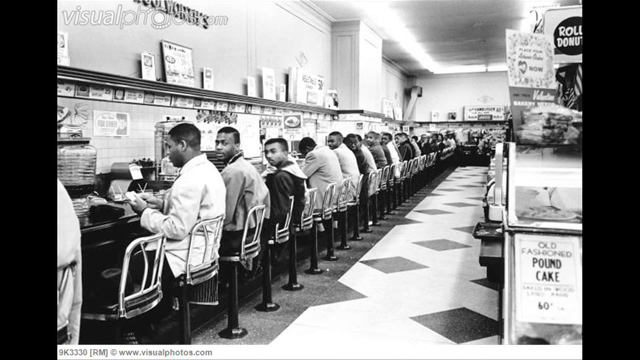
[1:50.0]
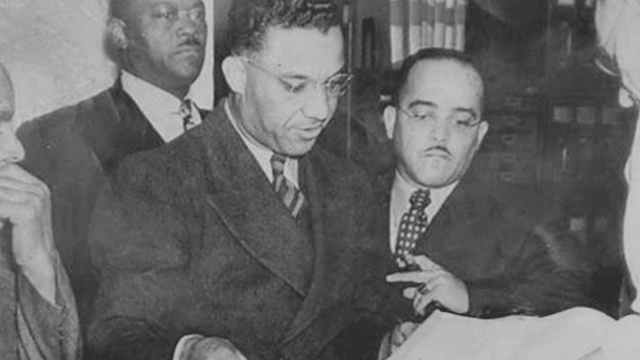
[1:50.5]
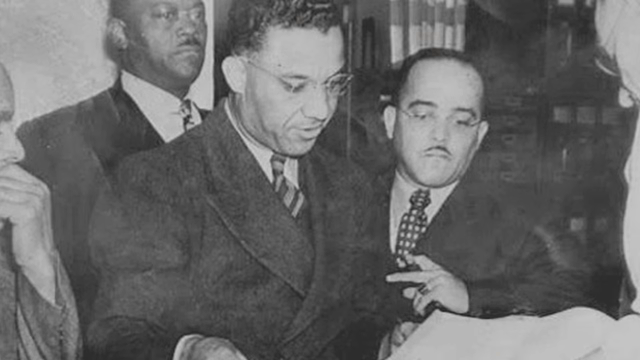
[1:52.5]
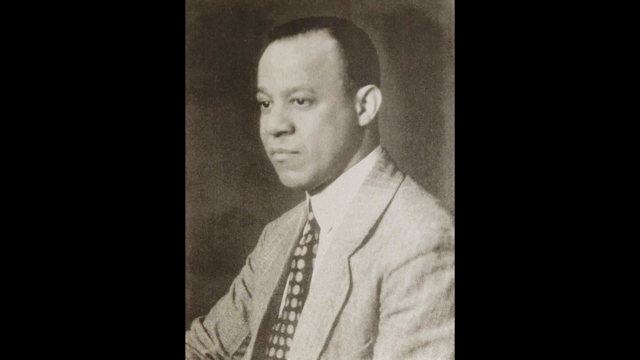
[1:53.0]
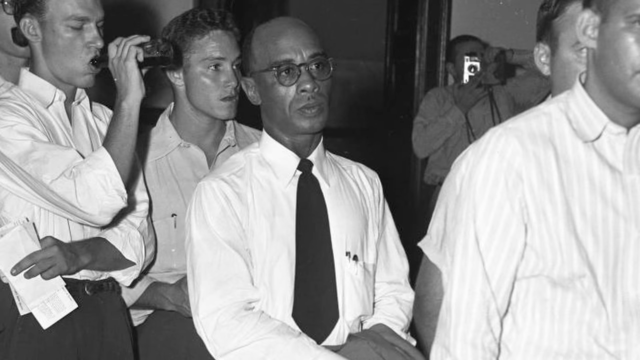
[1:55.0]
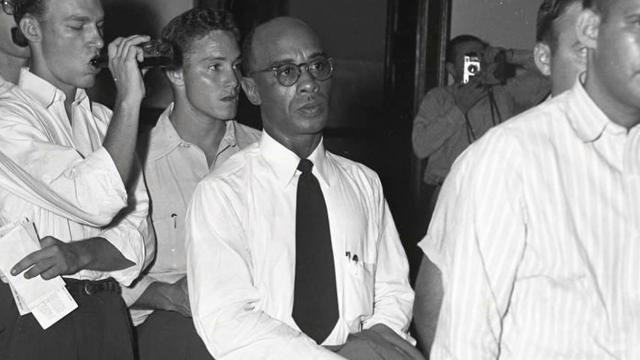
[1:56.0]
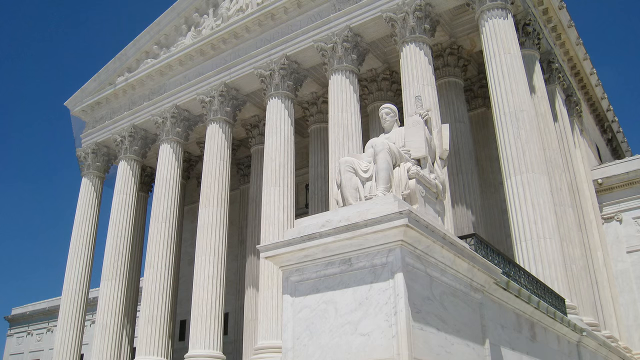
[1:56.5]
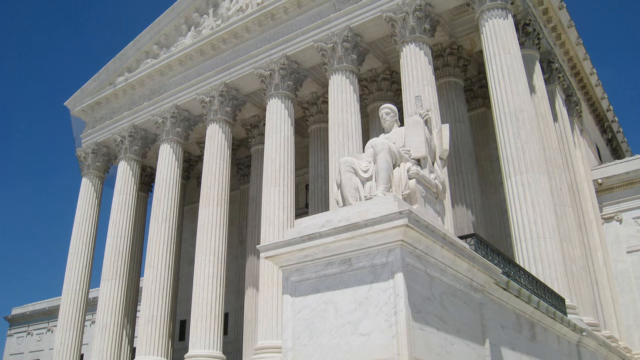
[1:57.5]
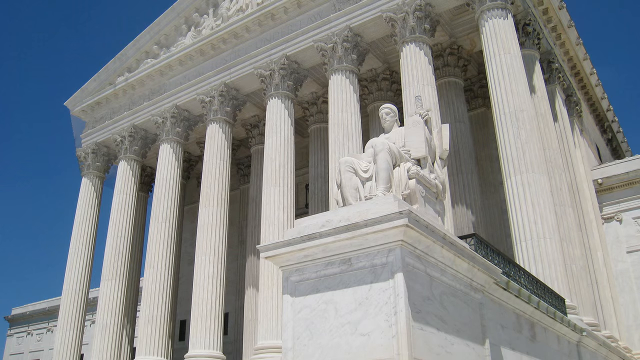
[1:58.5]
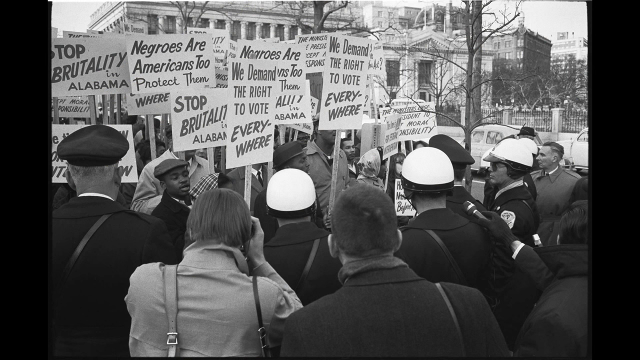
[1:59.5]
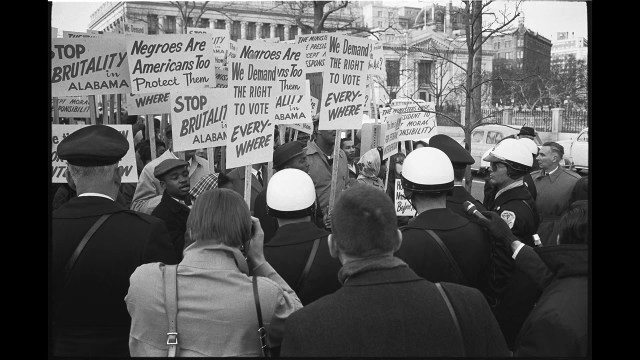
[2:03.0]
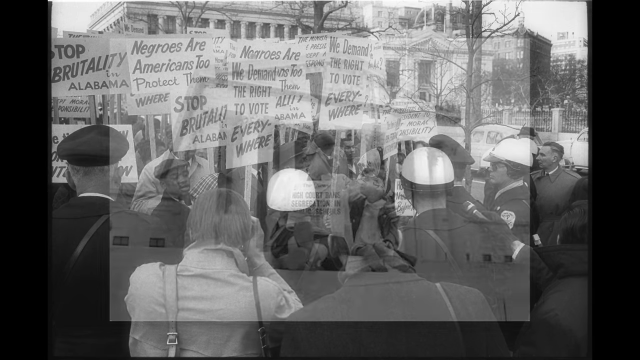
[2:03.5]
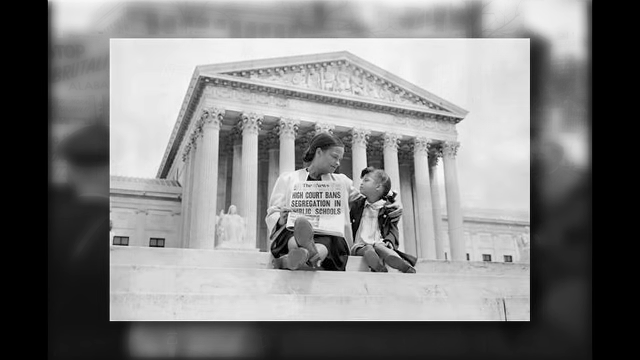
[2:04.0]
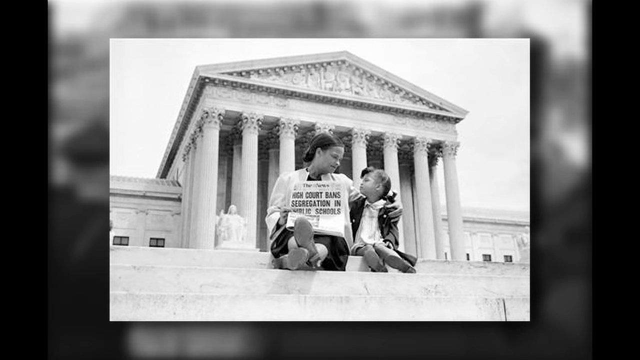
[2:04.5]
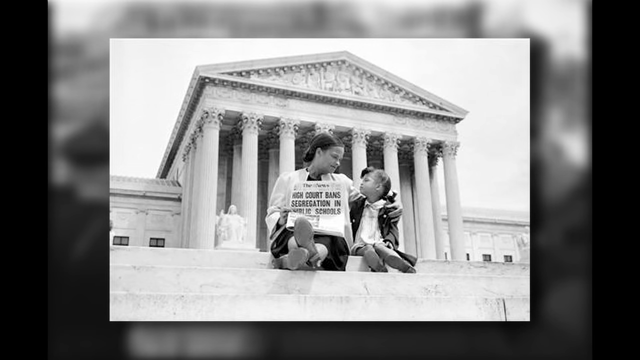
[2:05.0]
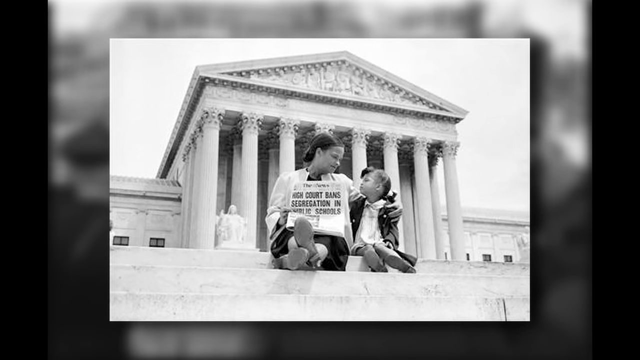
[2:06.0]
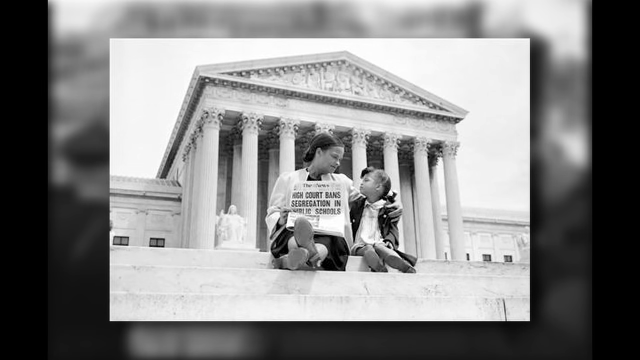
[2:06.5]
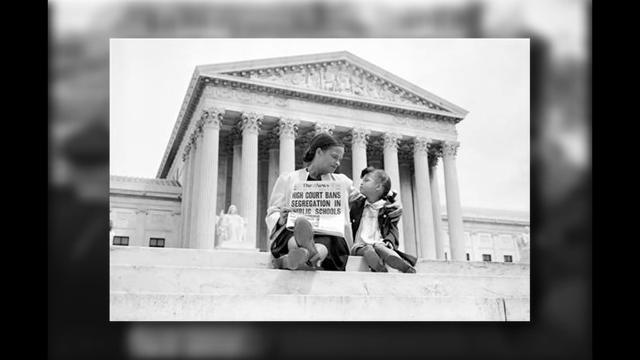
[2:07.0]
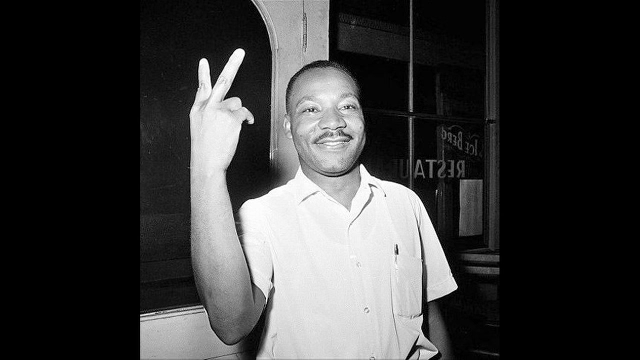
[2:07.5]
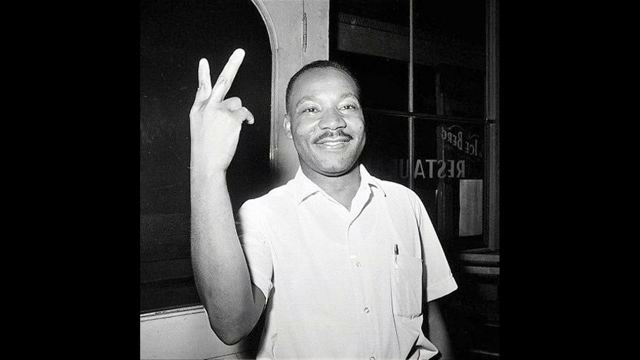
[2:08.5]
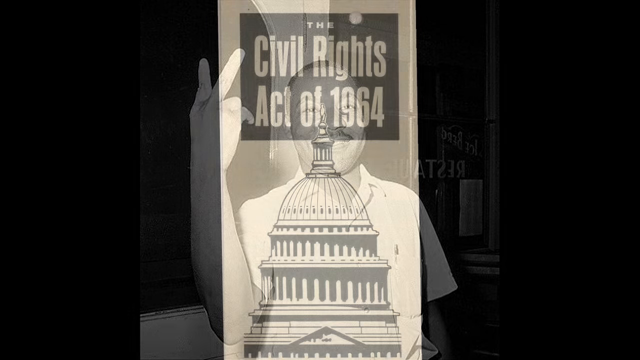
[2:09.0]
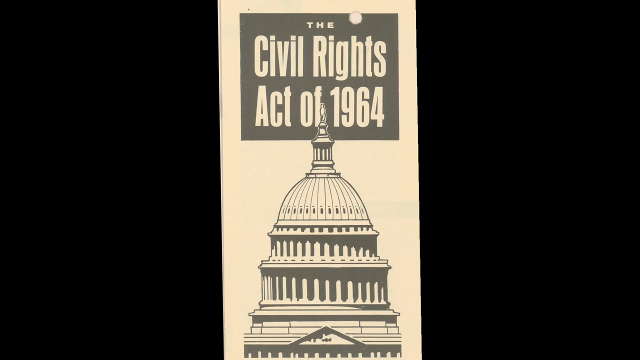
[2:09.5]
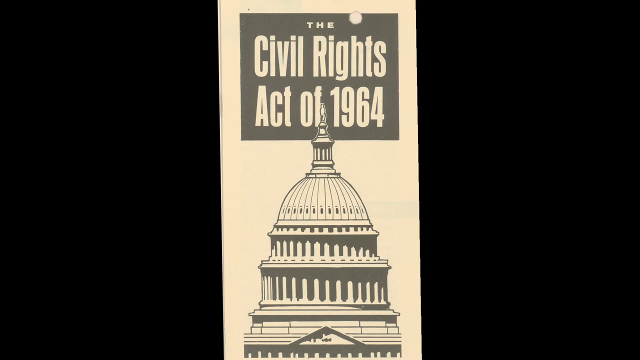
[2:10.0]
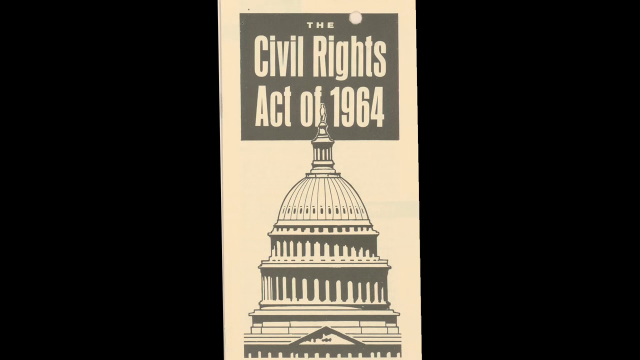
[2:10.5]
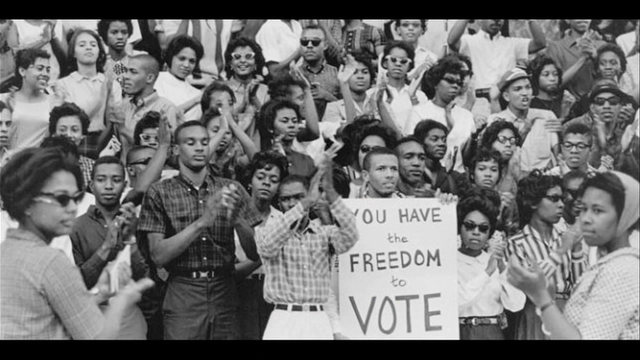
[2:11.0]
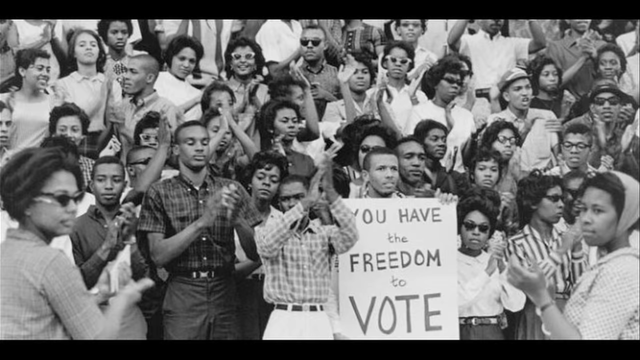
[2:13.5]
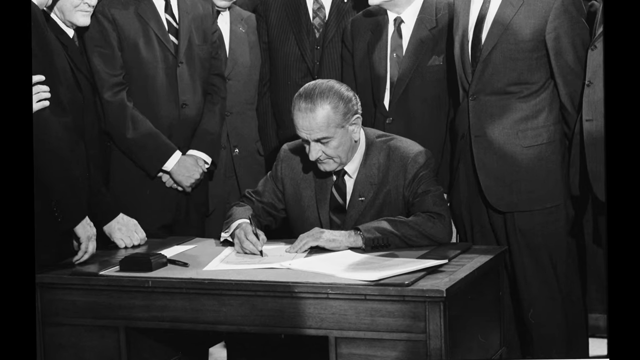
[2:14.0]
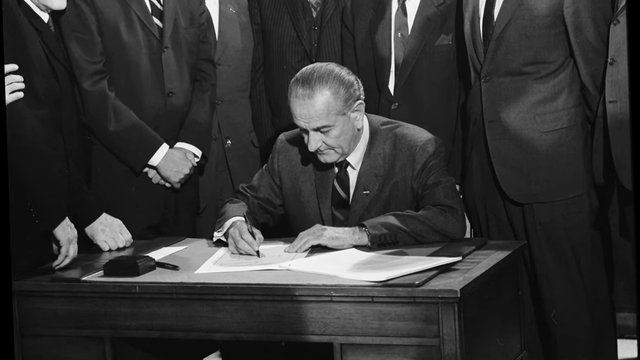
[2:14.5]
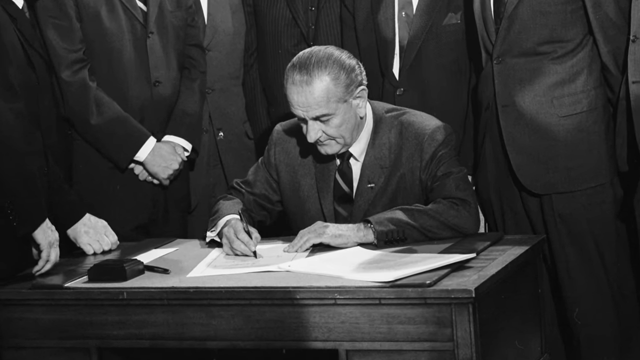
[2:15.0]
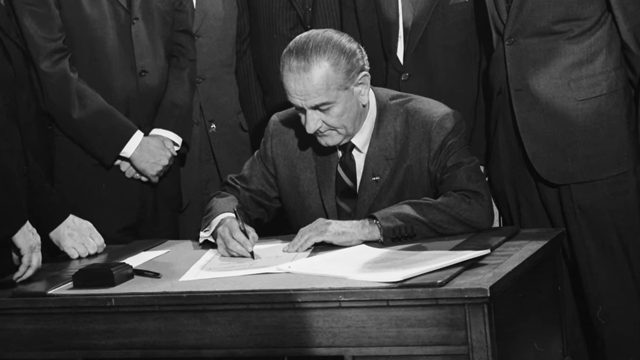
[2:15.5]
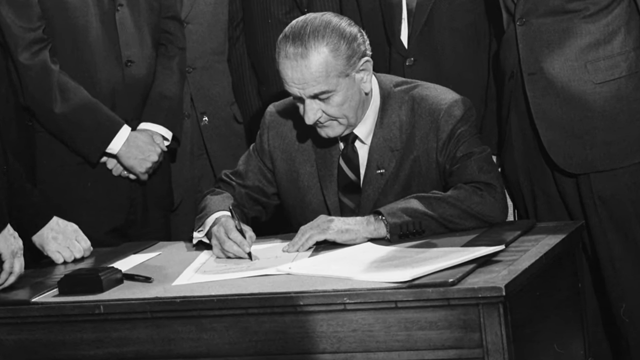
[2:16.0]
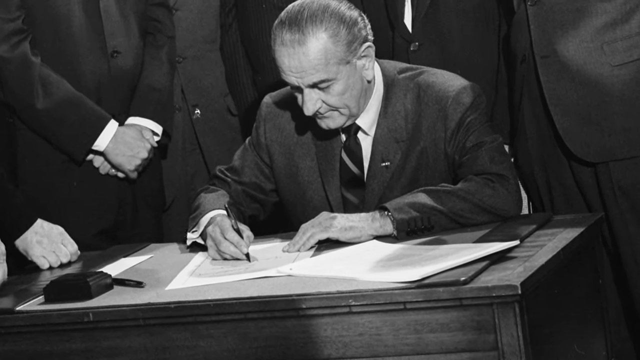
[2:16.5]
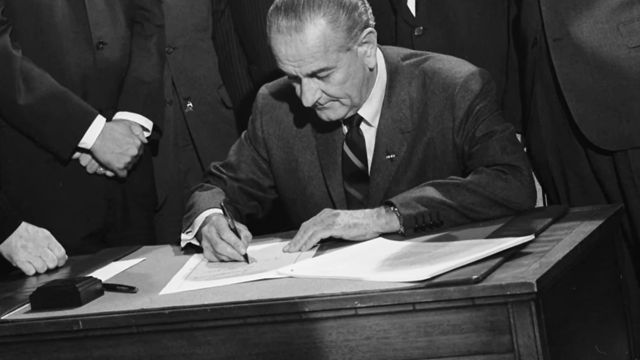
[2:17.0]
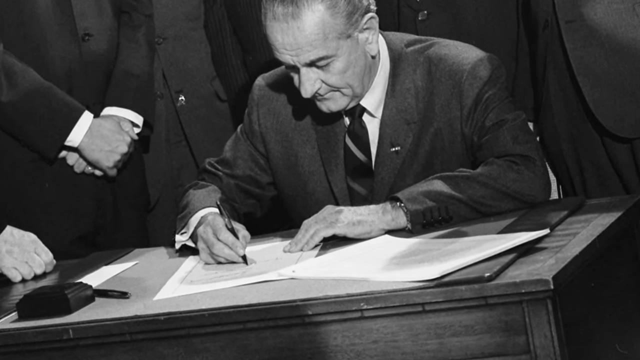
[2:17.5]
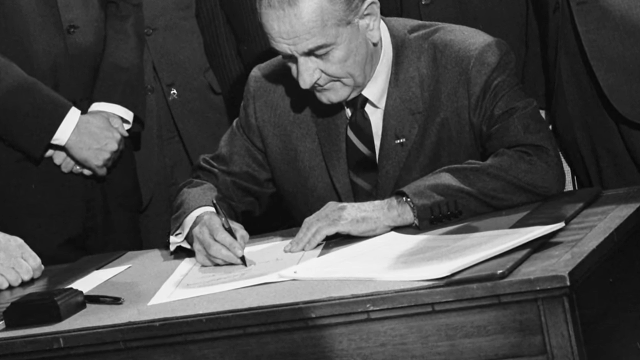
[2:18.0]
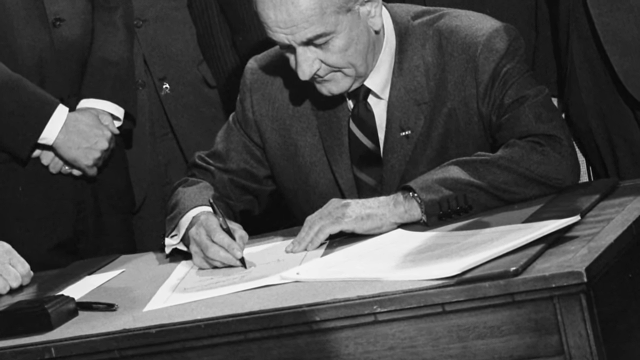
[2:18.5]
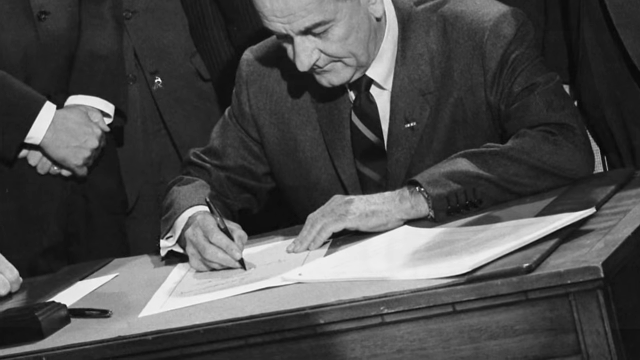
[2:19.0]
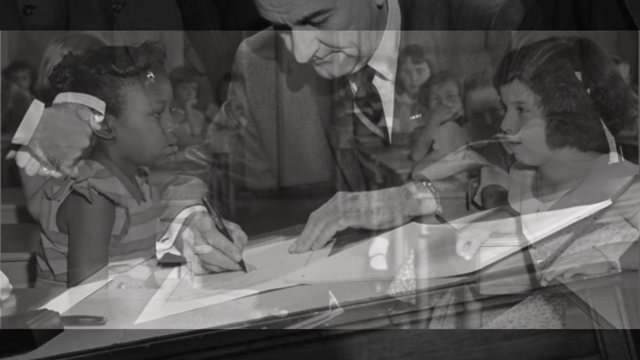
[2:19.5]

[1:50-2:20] African Americans sit in a restaurant. A portrait of an unidentified African American man follows, then what appears to be the Capitol building and a statue of a seated figure. Caucasian police face an African American protest, with signs saying "We demand the right to vote everywhere", "We demand the right to vote", "Negroes are Americans to protect them" and "Stop brutality in Alabama". A mother and daughter sit on the steps of the Capitol. A headline reads "high court bans segregation in public schools". A picture shows Martin Luther King holding up a peace sign, and then text about the Civil Rights Act of 1964 appears.